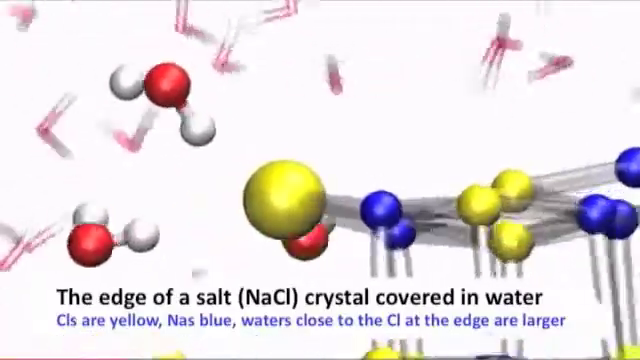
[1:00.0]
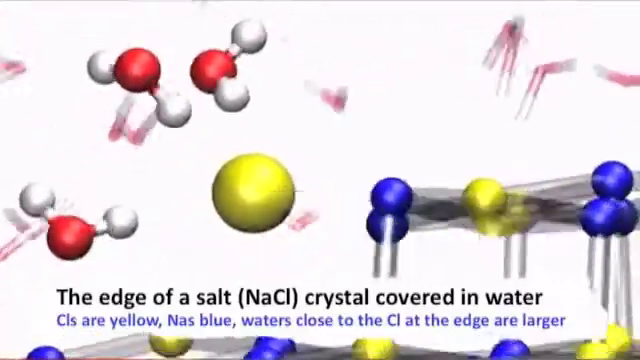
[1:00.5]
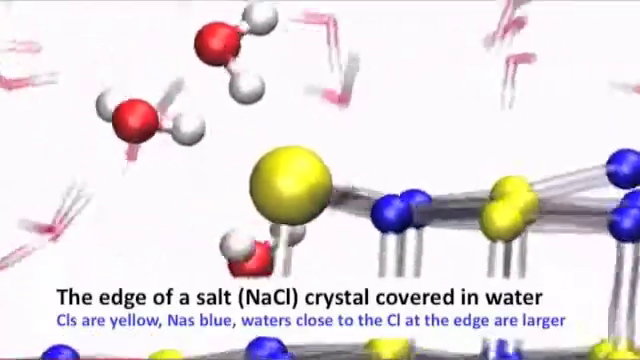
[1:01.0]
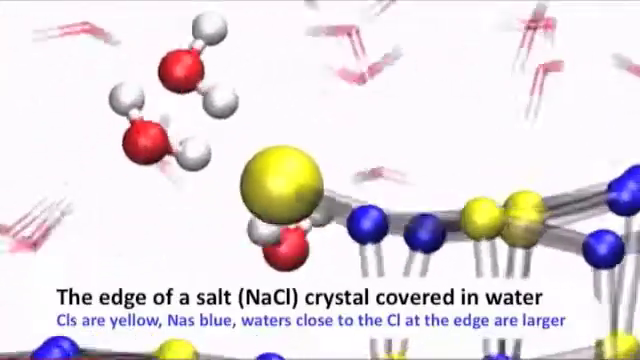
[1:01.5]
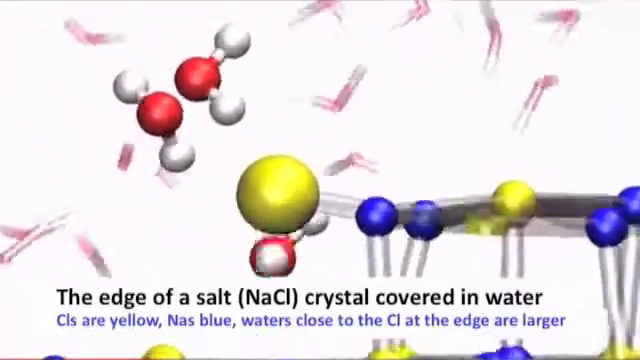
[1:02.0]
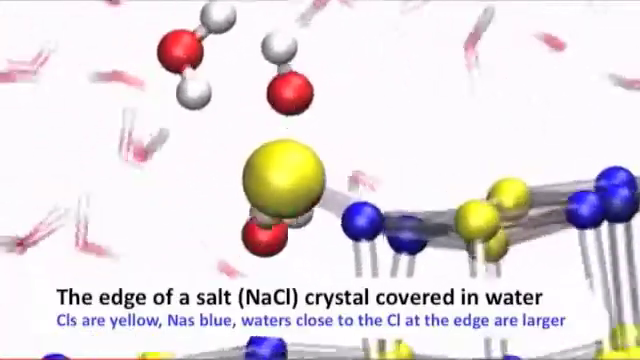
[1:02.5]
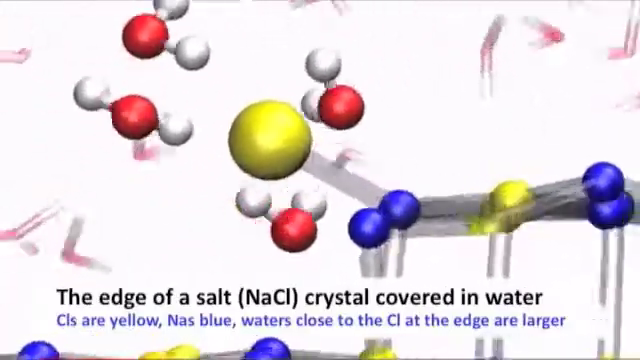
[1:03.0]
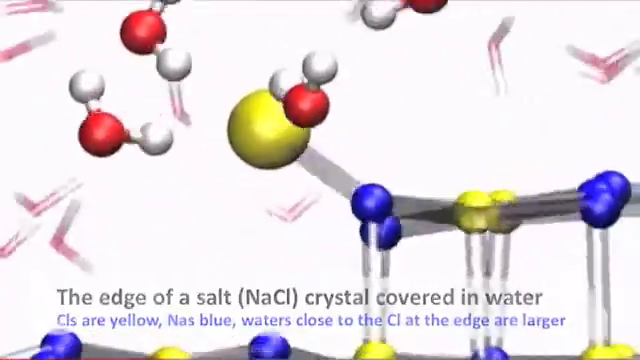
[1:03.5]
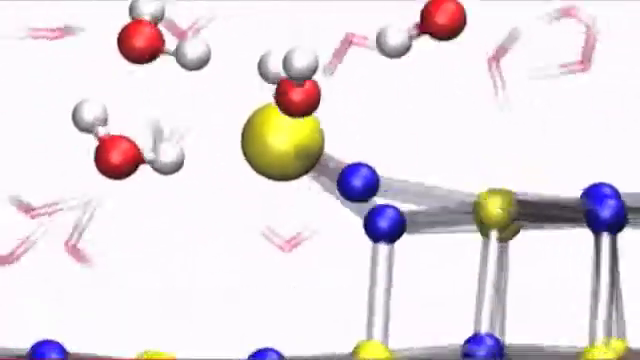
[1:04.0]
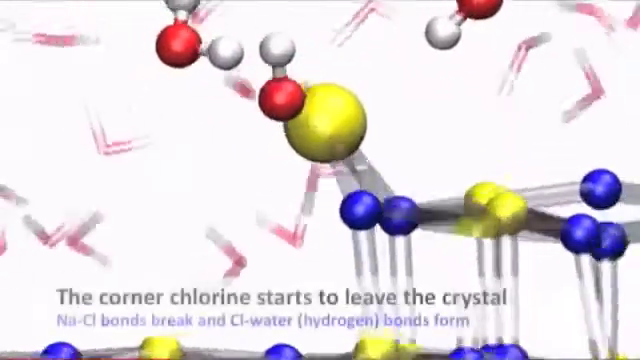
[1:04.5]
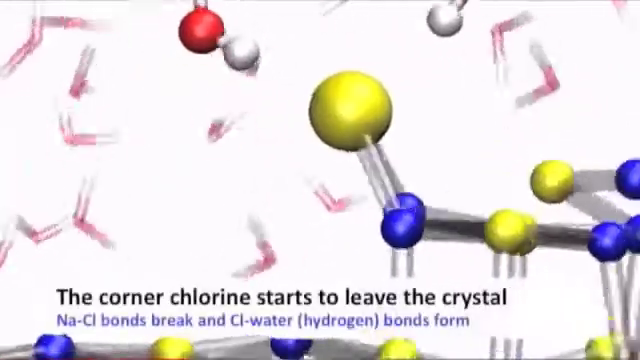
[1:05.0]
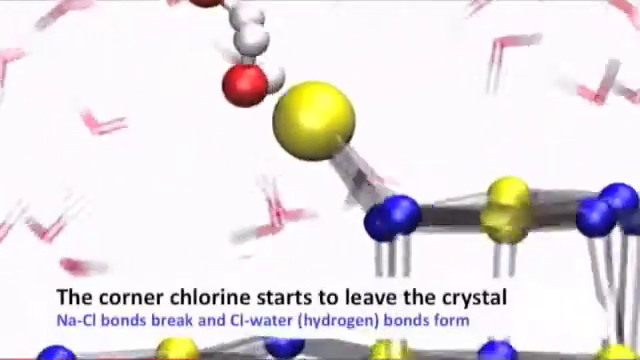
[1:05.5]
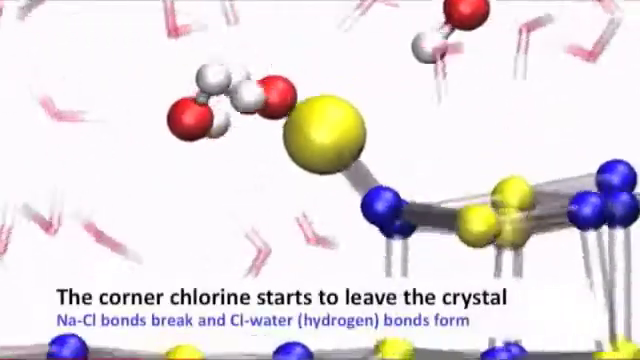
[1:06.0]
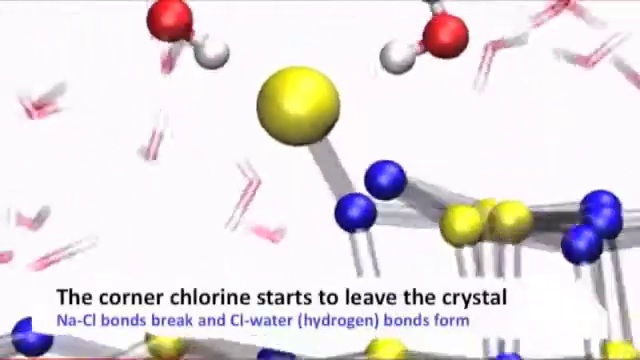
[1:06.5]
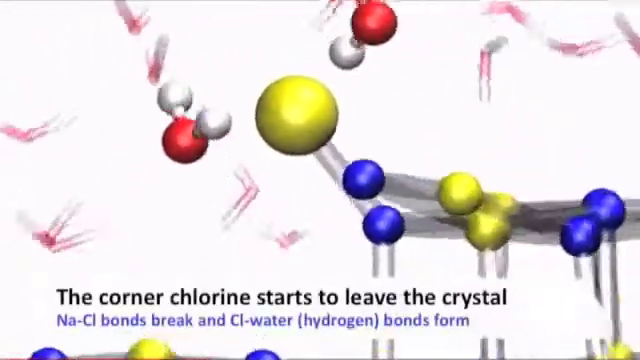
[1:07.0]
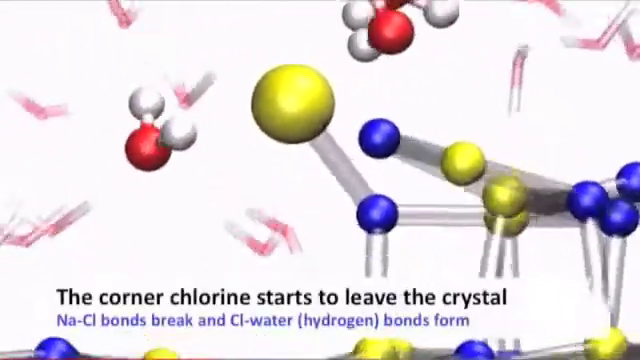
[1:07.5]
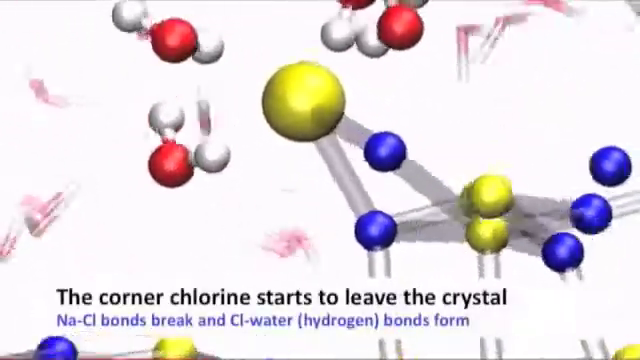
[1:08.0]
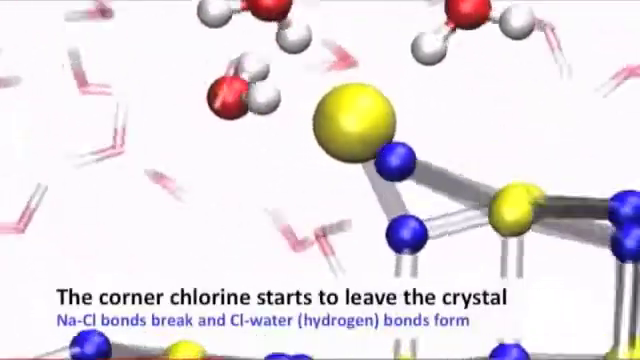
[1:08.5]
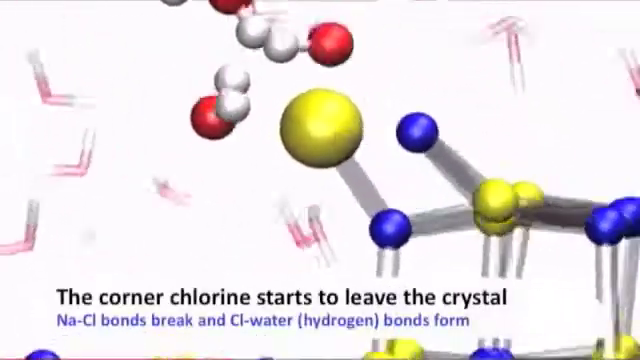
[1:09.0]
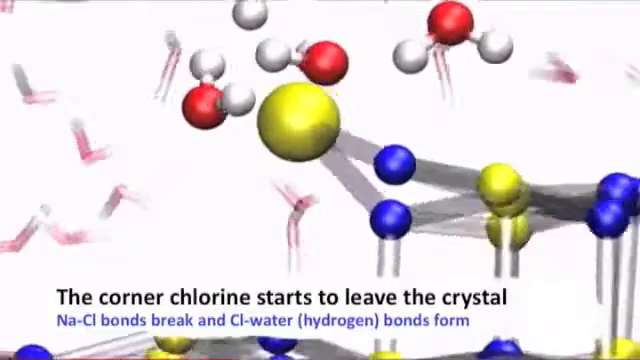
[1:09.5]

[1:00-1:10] The animation concerns the edge of a salt NACL crystal covered in water, showing blue, red, white, and purple cells connected by gray lines. It is animated, kind of like a comic strip, and the cells fly and flutter around. The red ones have two white cells on either side, and the yellow and purple ones are connected by a gray line. Gray lines underneath them point down to the bottom. Text reads "the corner chlorine starts to leave the crystal," with a more scientific explanation underneath in purple writing.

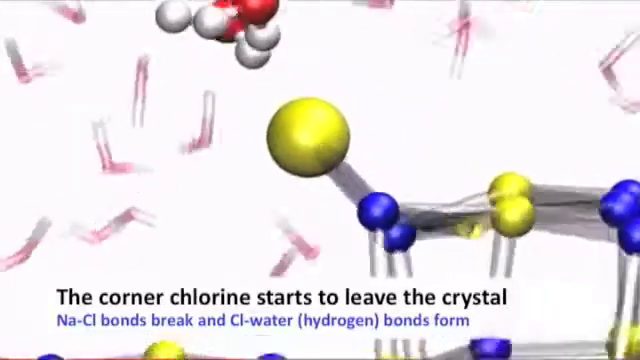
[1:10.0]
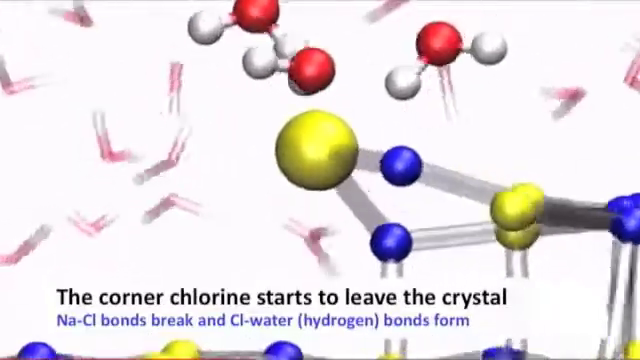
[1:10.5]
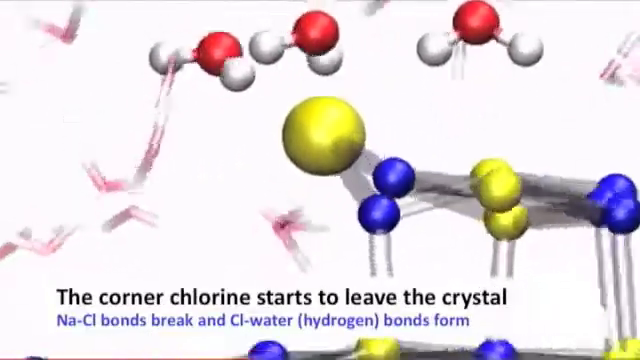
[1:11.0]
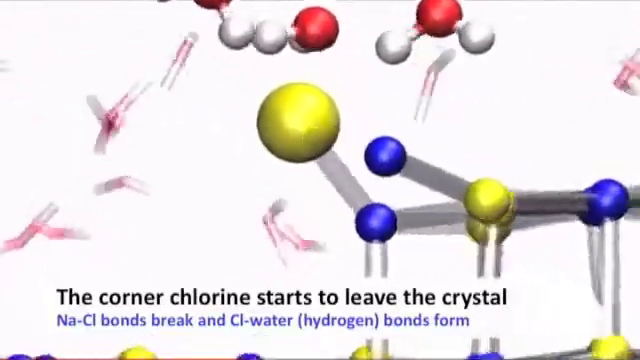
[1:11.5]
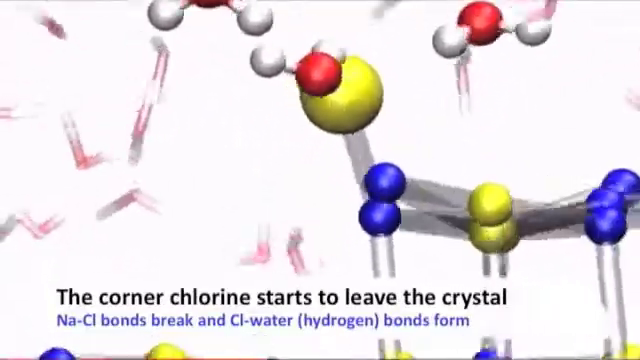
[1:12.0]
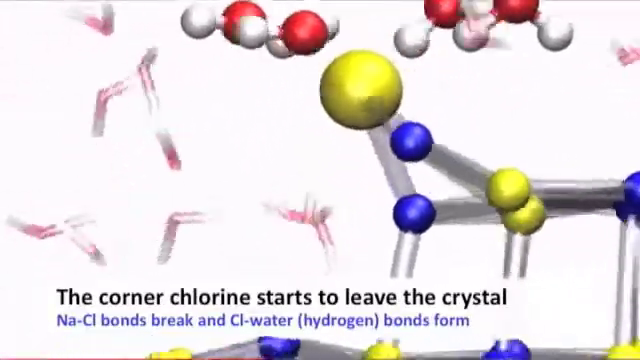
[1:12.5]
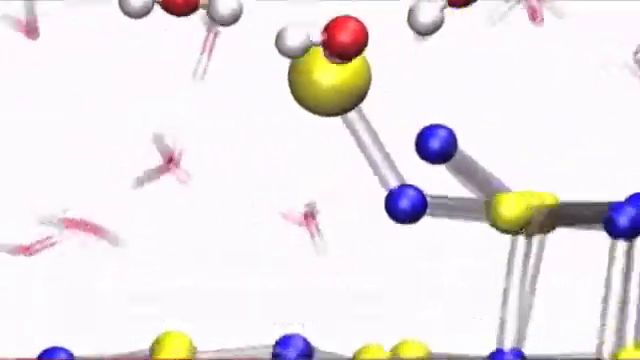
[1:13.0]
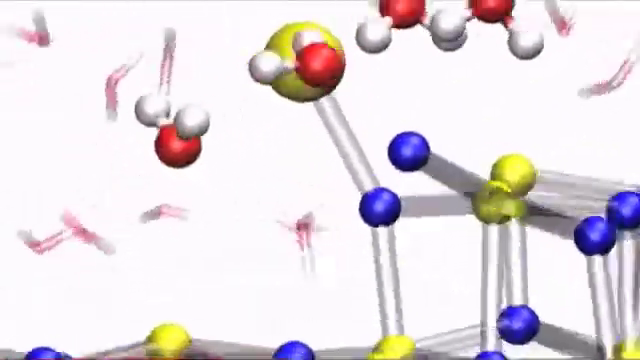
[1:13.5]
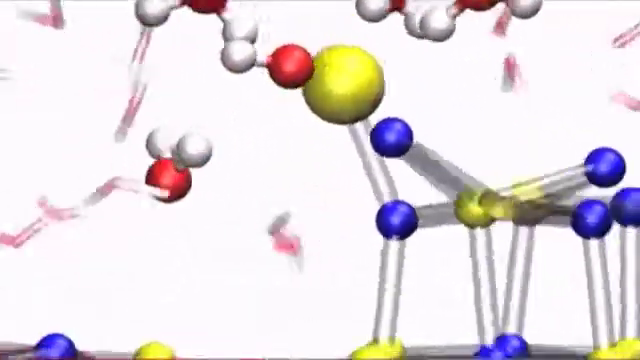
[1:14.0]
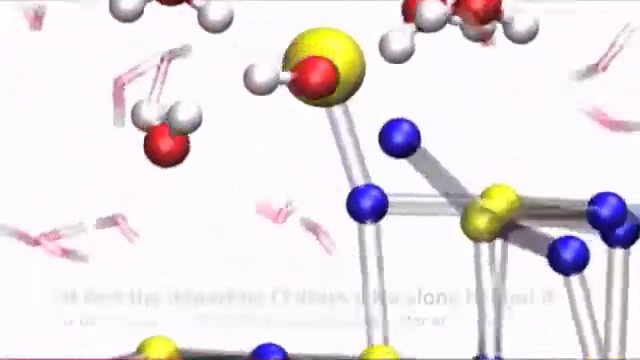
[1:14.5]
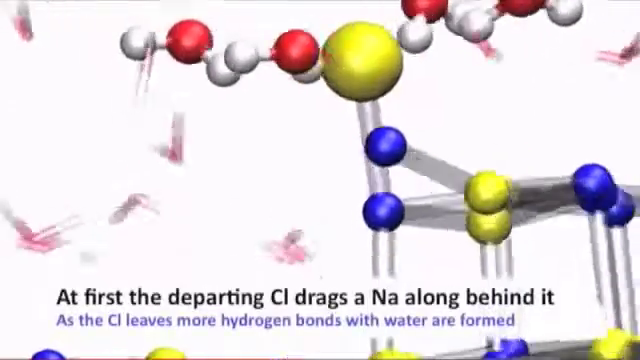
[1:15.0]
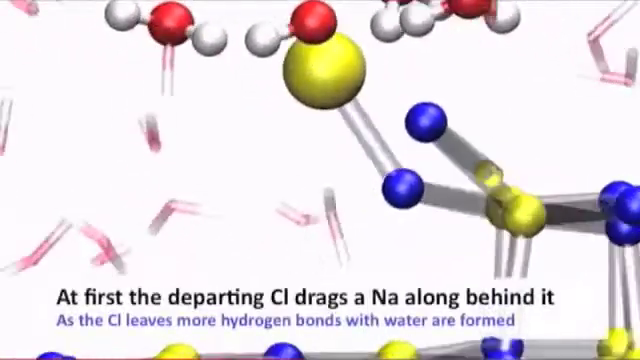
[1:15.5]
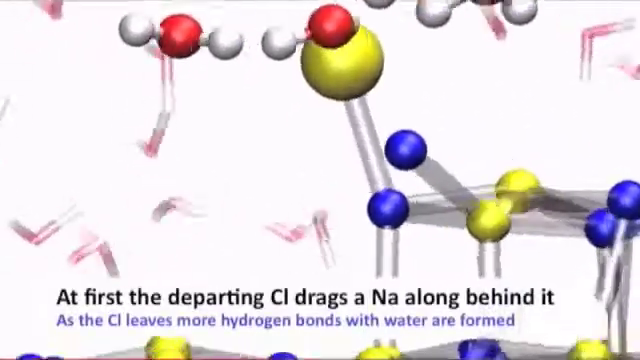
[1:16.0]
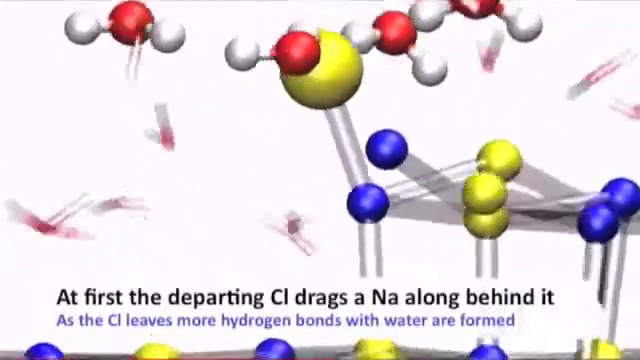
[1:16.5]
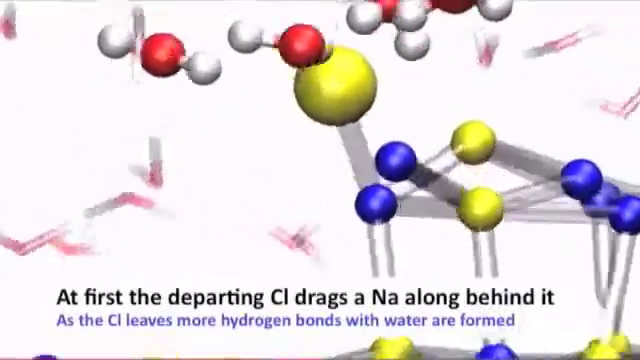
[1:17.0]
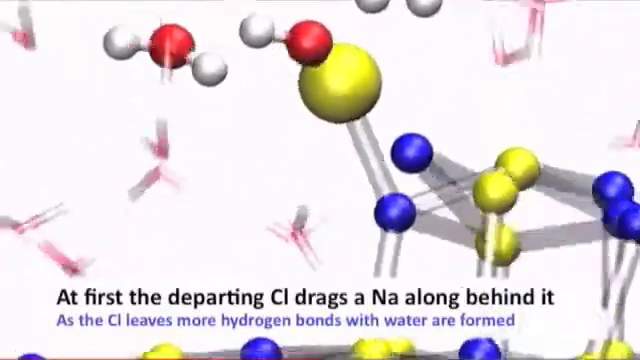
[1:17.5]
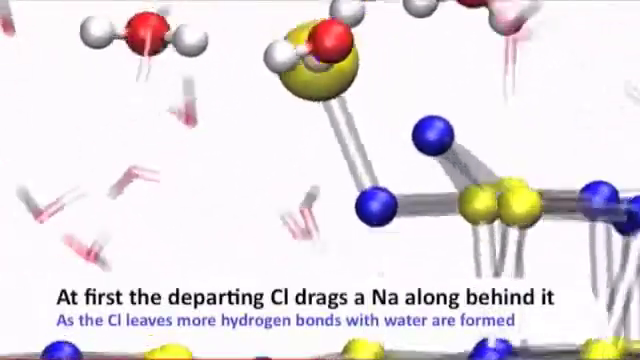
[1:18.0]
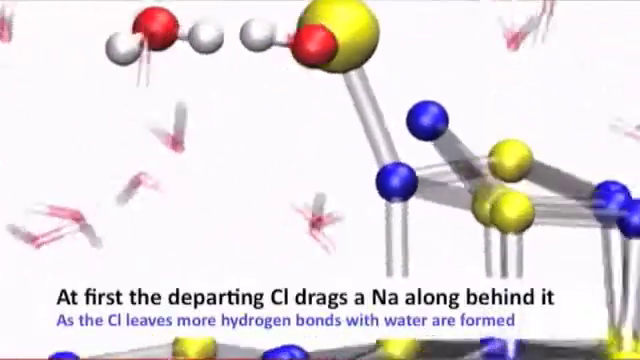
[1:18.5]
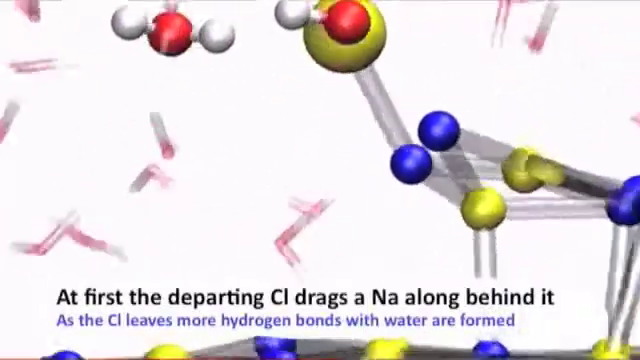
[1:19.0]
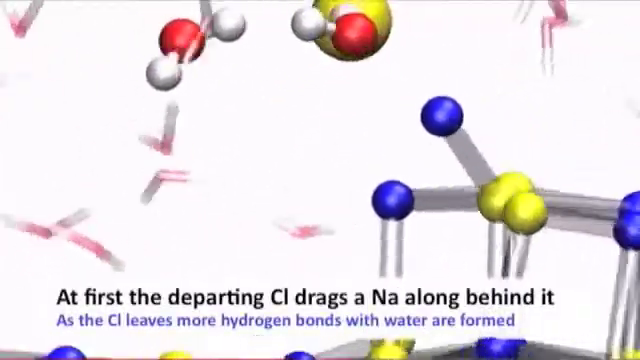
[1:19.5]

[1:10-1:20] Text about the corner chlorine and how salt dissolves in water appears, then the screen switches. Text reads "first the departing CI drags an NA" and "the corner chlorine starts to leave the crystal." Connected yellow and purple cells or atoms are joined by gray strands strung between them. Red cells each have two white circles, one on the right and one on the left. Everything flutters around the screen in constant movement, including small red and white V-shaped objects resembling chromosomes. Black lettering at the bottom explains what is happening.